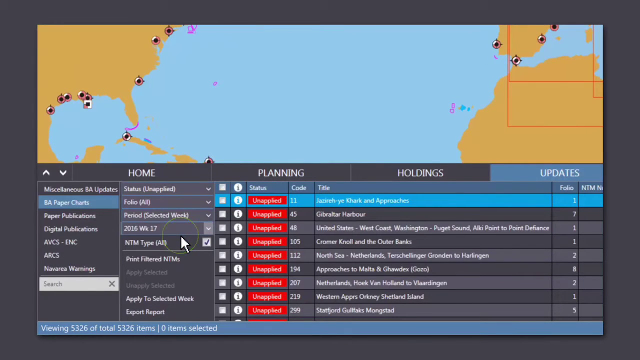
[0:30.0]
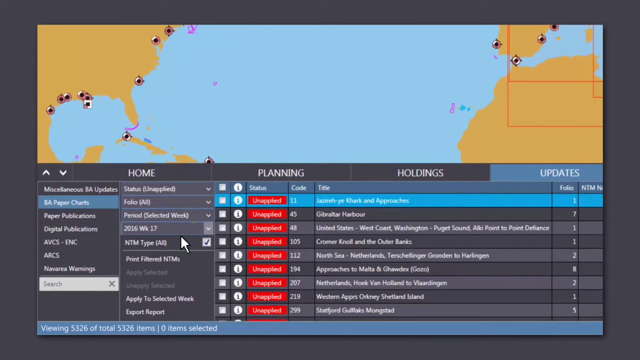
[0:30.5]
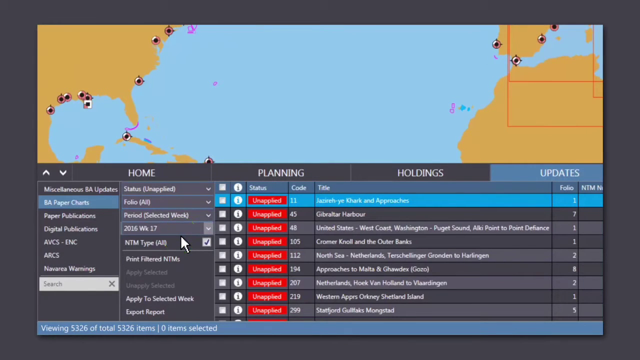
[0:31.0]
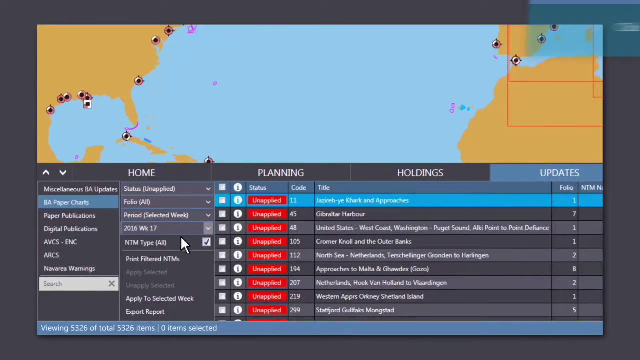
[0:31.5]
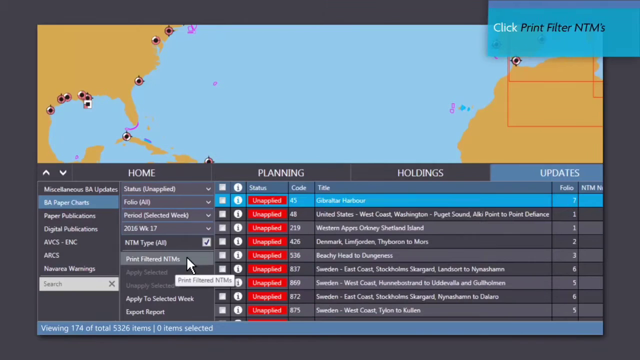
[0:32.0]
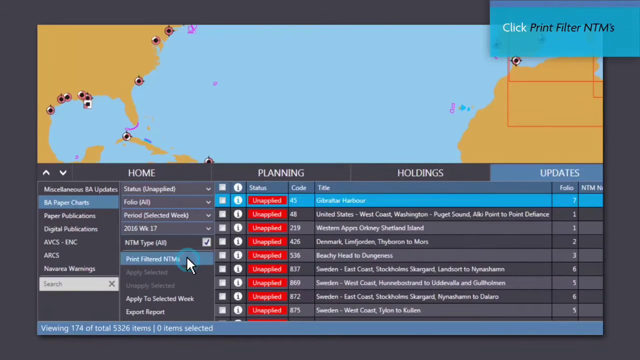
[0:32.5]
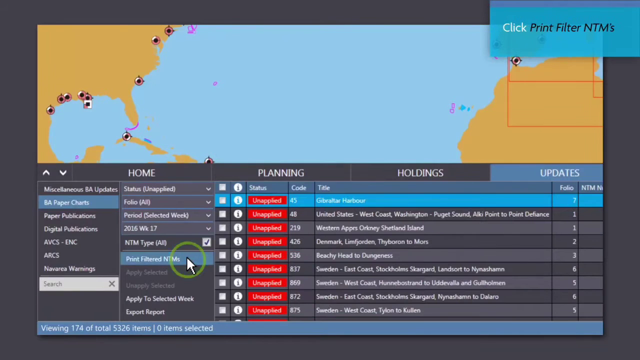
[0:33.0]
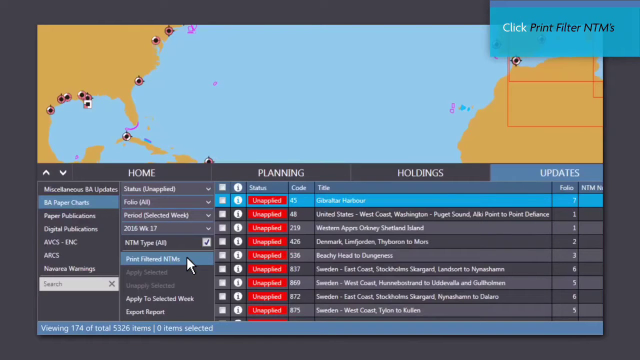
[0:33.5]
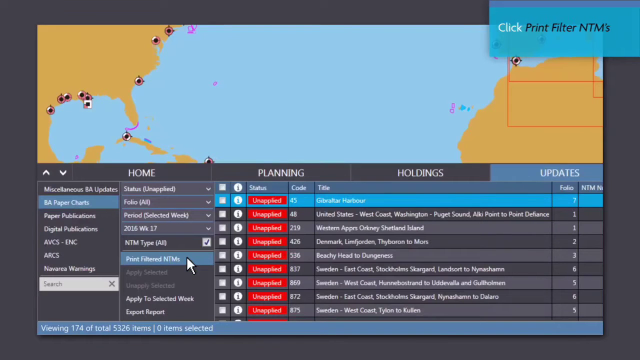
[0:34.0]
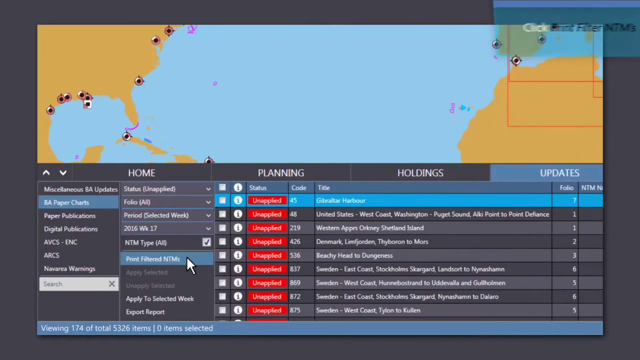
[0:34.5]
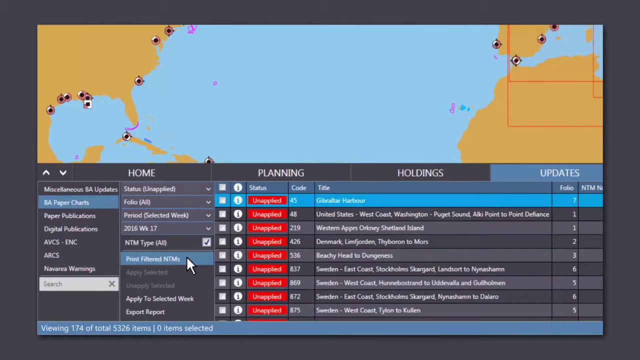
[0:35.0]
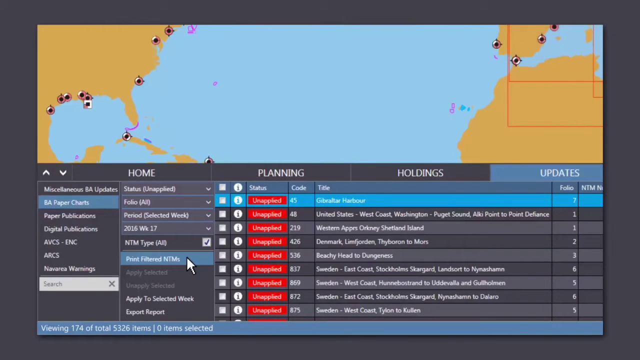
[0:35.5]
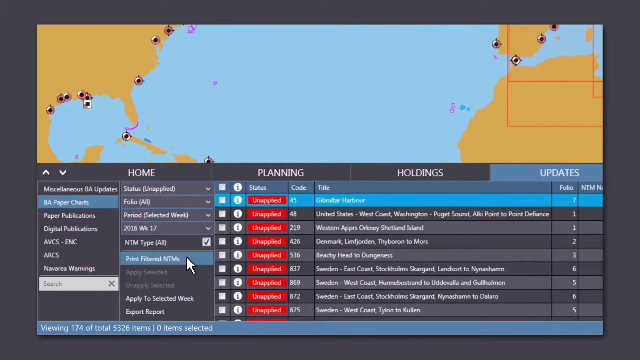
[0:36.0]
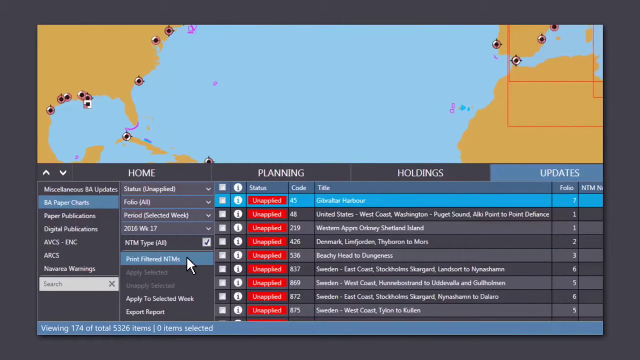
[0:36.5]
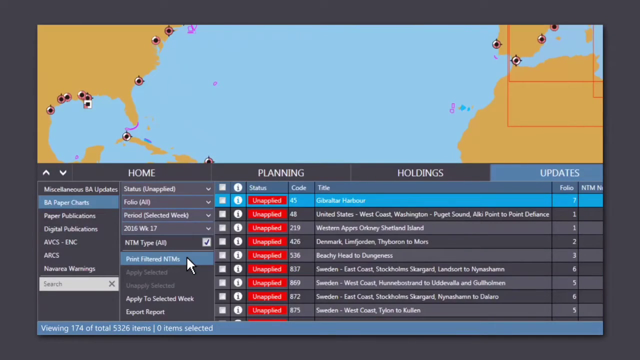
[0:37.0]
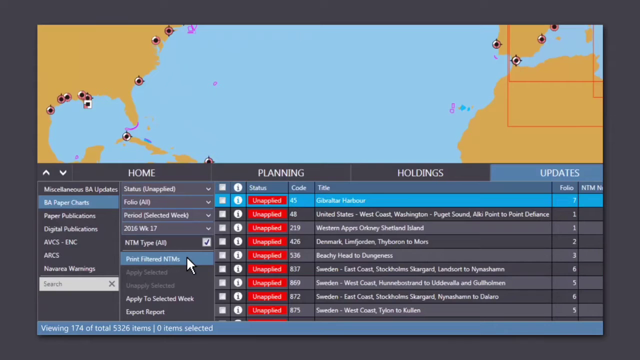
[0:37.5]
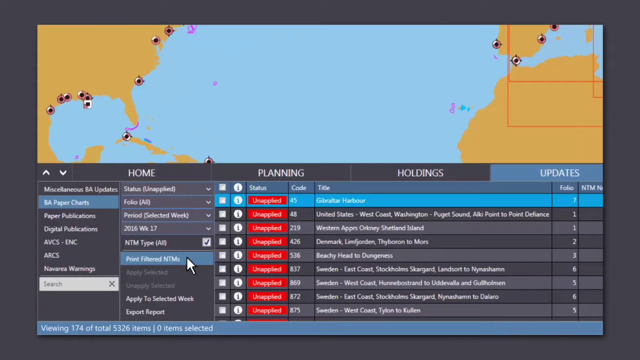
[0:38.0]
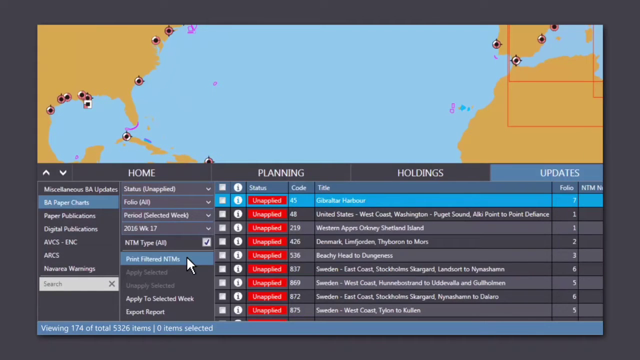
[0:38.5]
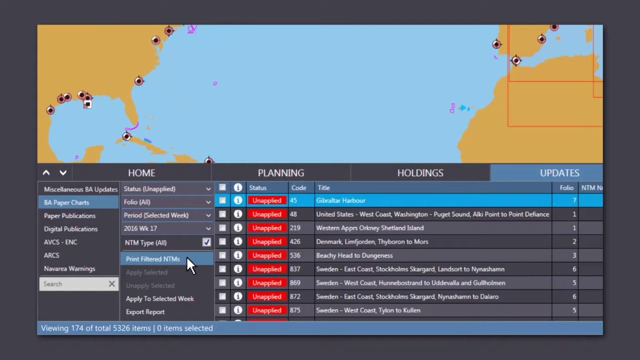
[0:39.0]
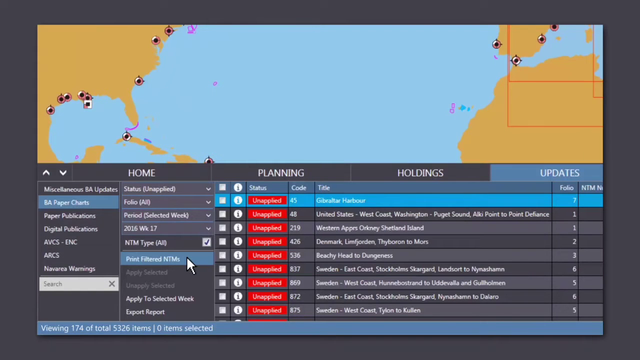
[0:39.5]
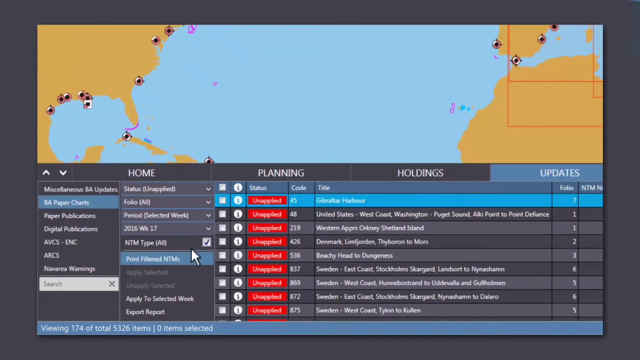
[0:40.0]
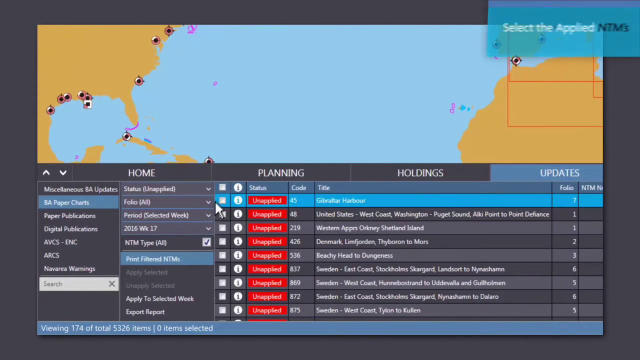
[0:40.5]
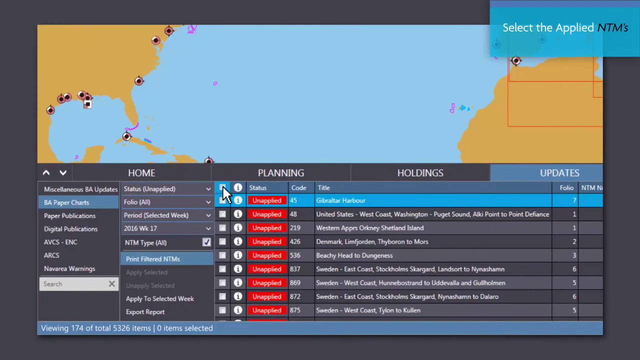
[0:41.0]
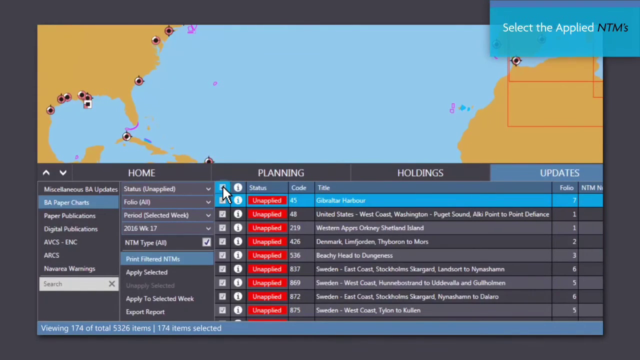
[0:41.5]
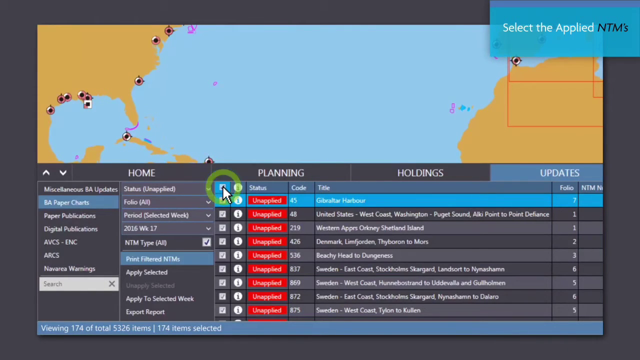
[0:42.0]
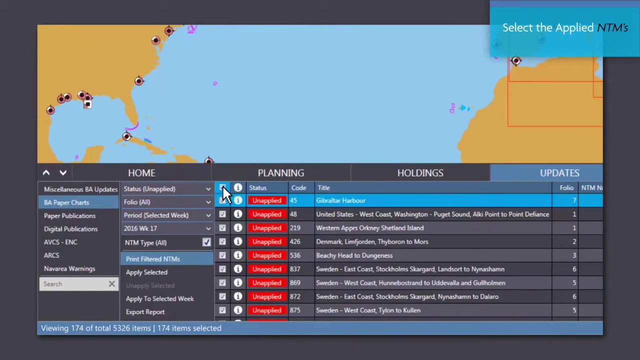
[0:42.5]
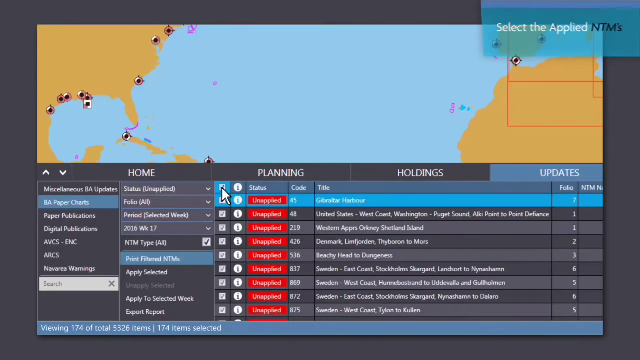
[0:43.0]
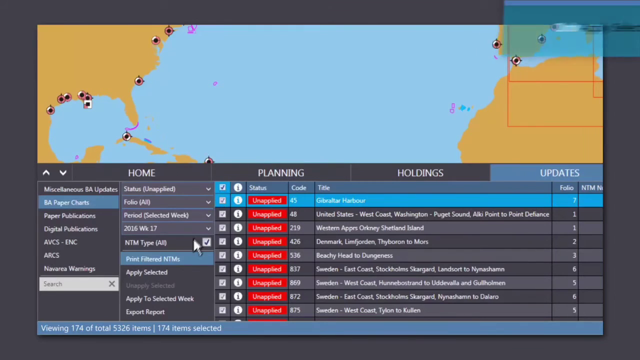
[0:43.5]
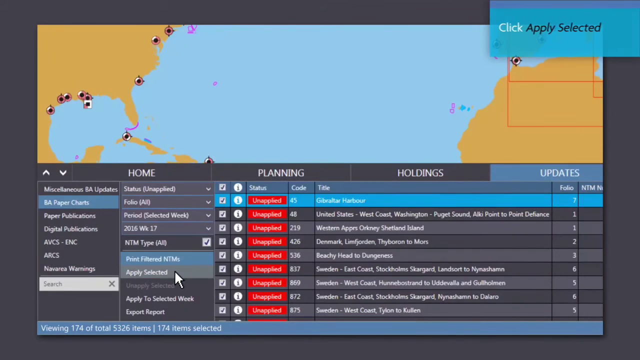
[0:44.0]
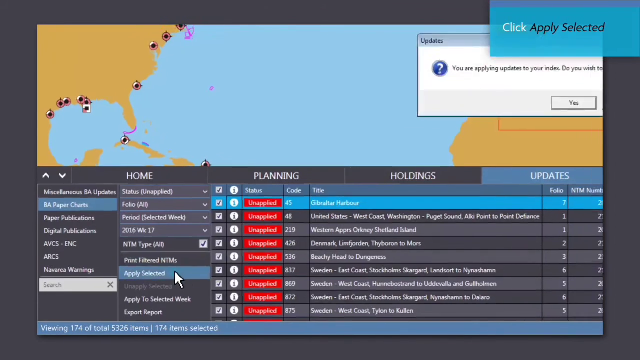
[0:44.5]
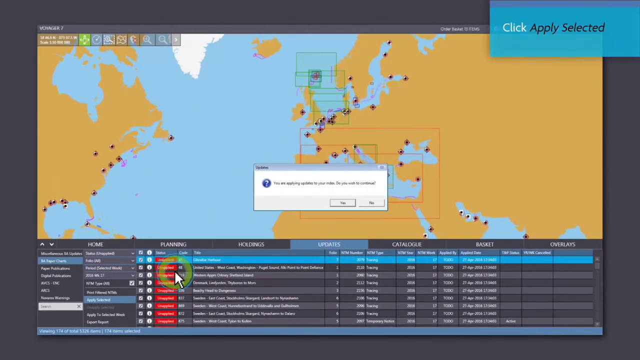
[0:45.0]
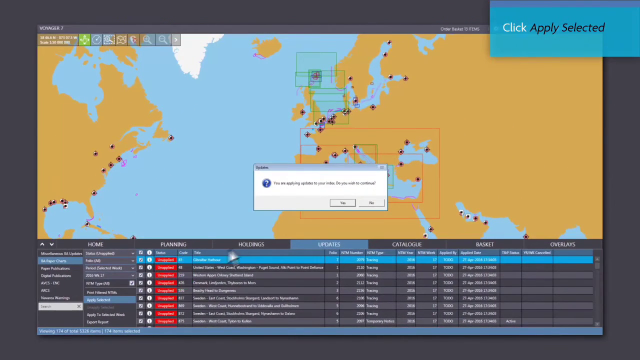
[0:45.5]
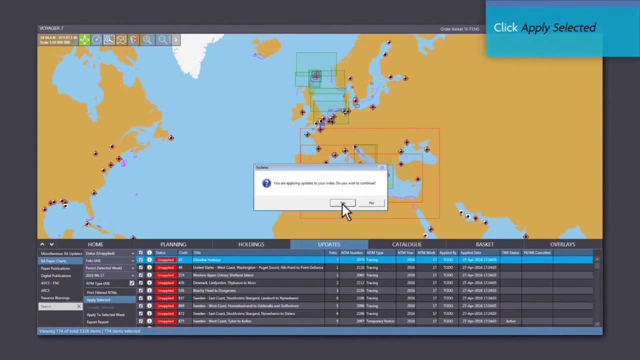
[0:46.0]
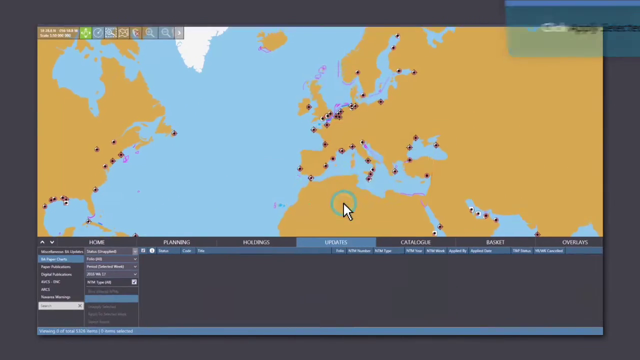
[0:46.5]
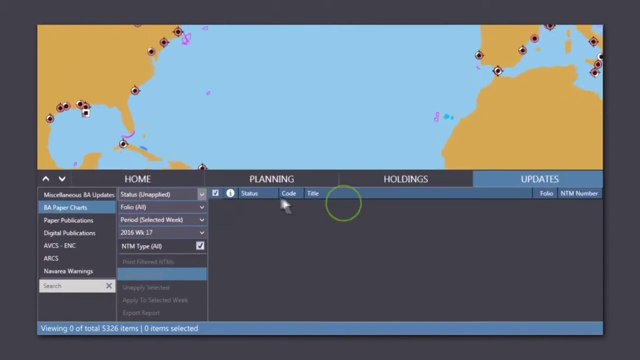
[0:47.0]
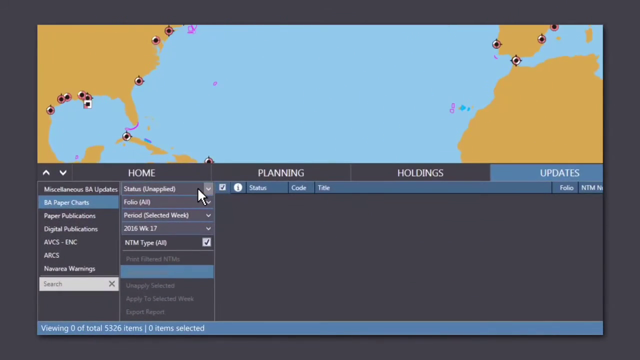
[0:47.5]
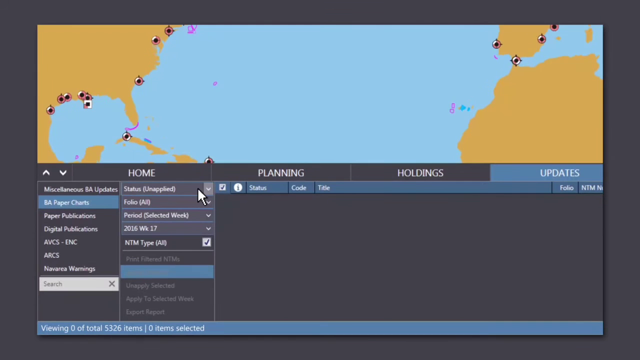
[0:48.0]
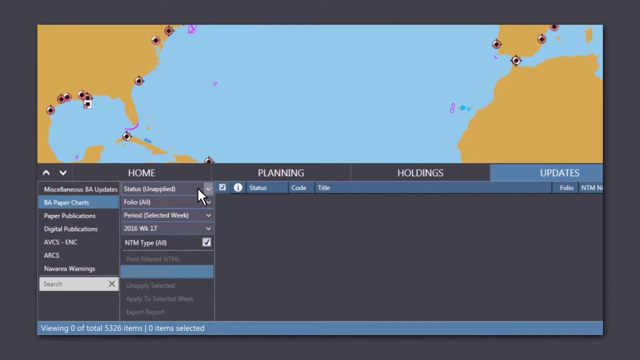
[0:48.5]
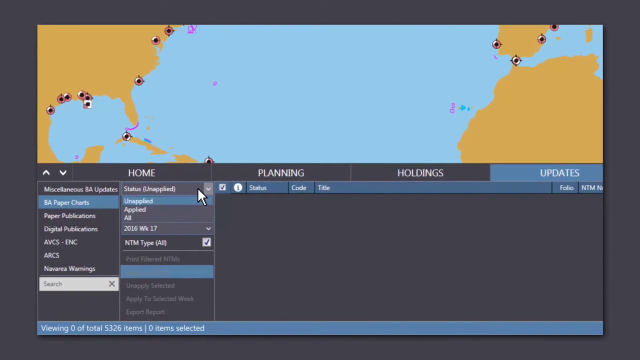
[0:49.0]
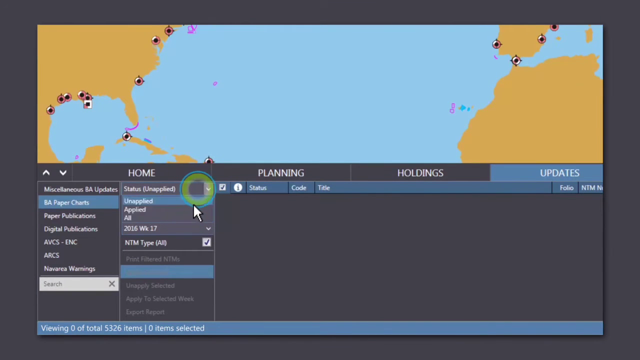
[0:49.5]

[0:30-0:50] The screen says "click filter NTM's." Print filtered NTM's is clicked, NTM and type all are checked, and the box is checked to select all of the NTMs. The NTMs are shown in red boxes, all saying unapplied. A small window appears that says "select the applied NTM's," and apply selected is clicked. A window then pops up in the center of the screen that says "update. You are applying updates to your NTM's in box, do you wish to continue?" Yes is pressed, and the NTMs that were previously red turn green, showing that they have been applied.